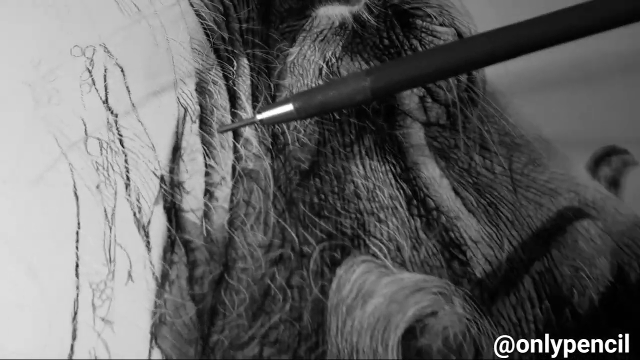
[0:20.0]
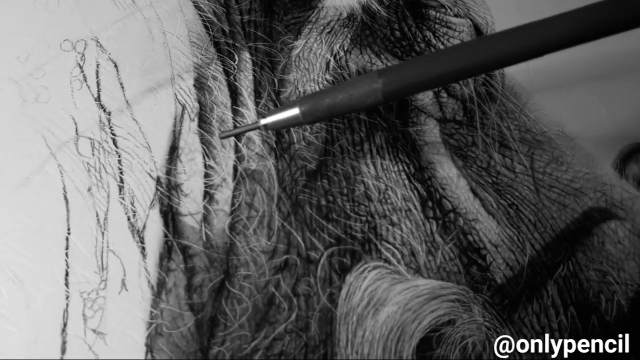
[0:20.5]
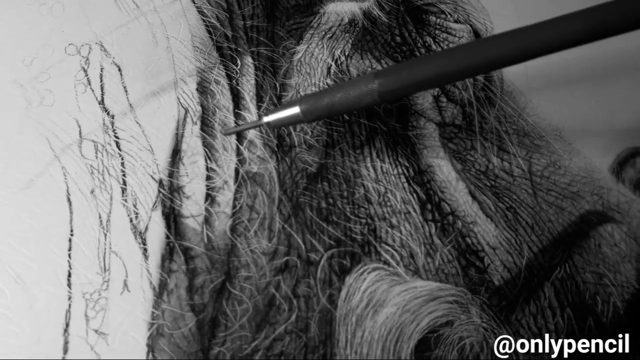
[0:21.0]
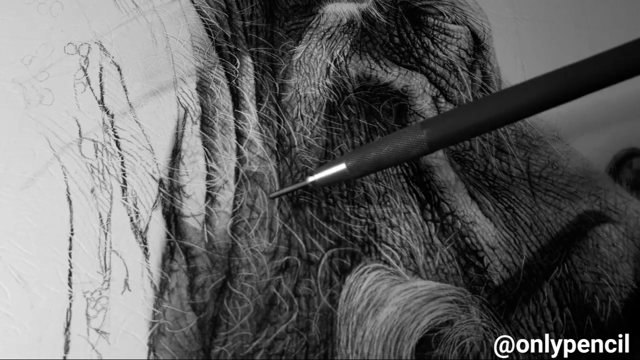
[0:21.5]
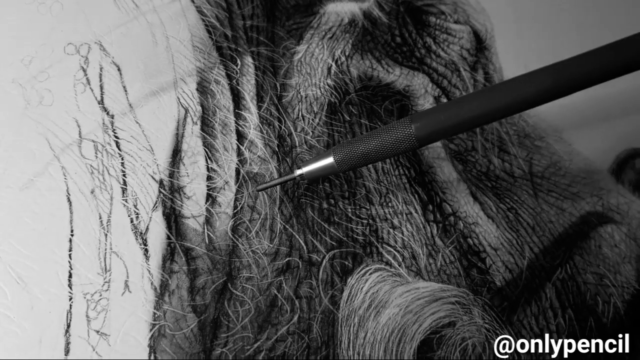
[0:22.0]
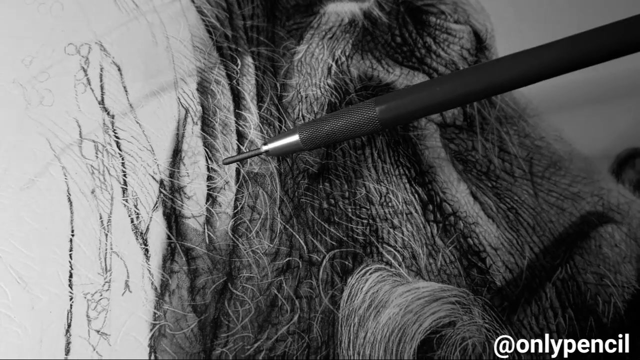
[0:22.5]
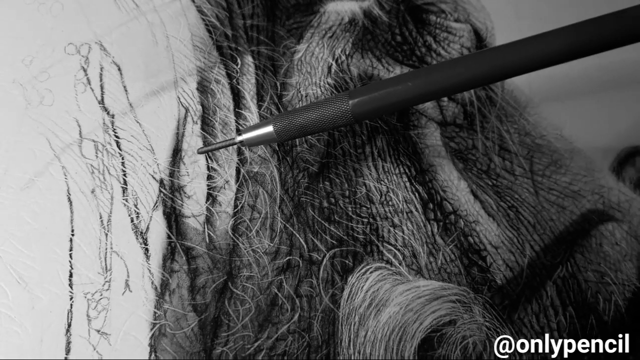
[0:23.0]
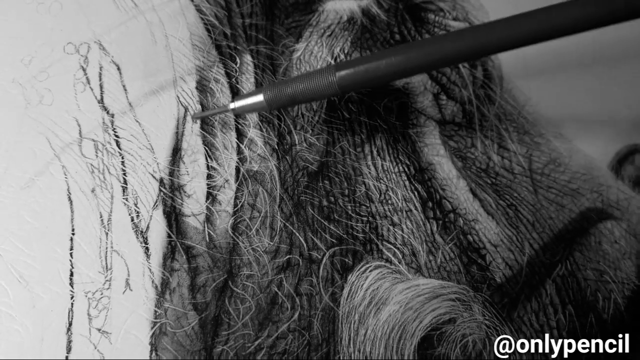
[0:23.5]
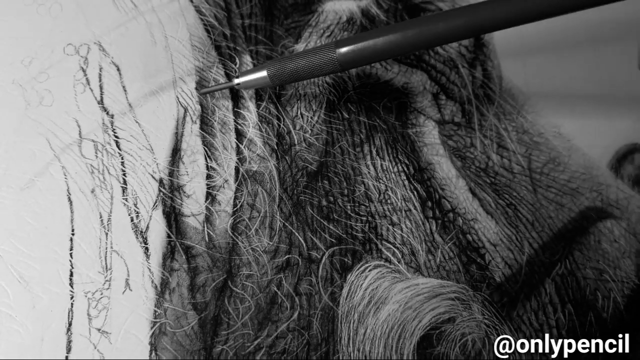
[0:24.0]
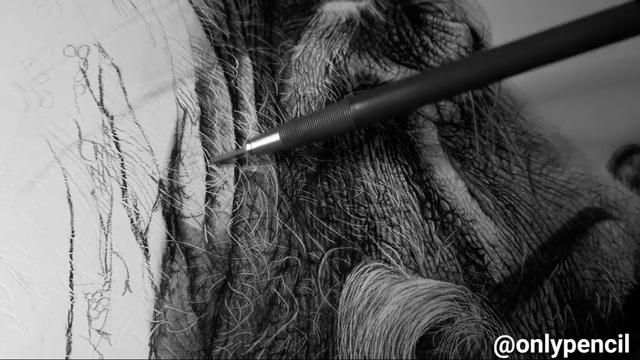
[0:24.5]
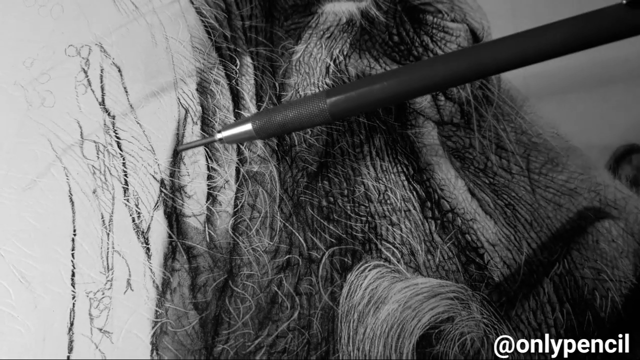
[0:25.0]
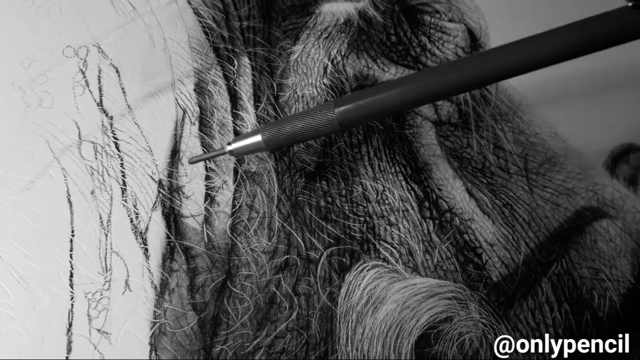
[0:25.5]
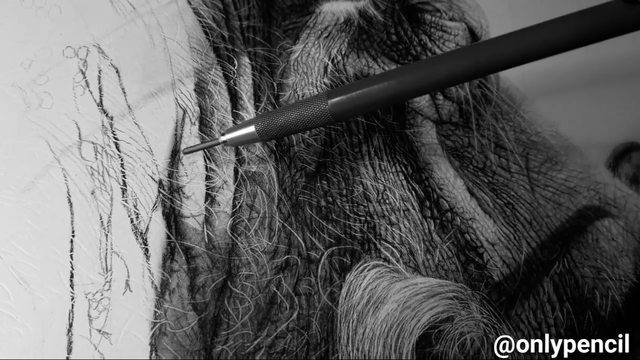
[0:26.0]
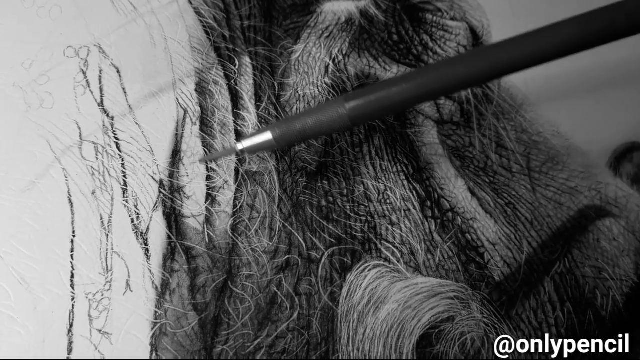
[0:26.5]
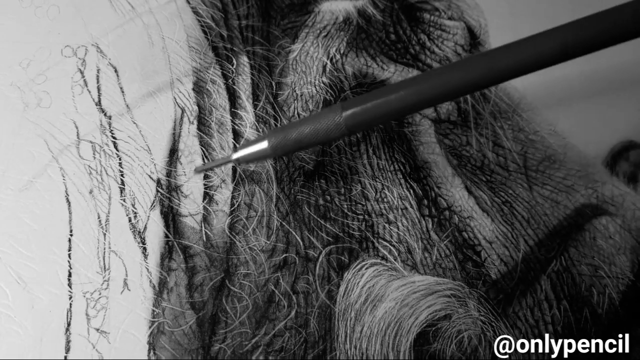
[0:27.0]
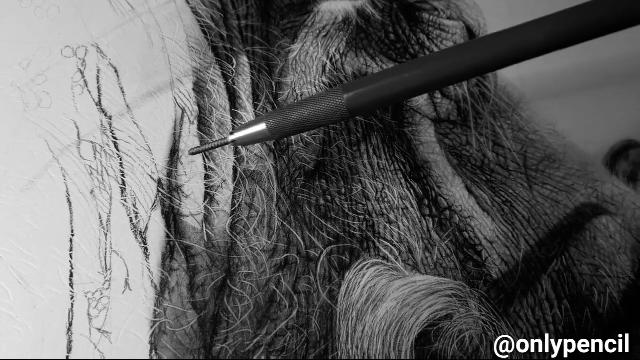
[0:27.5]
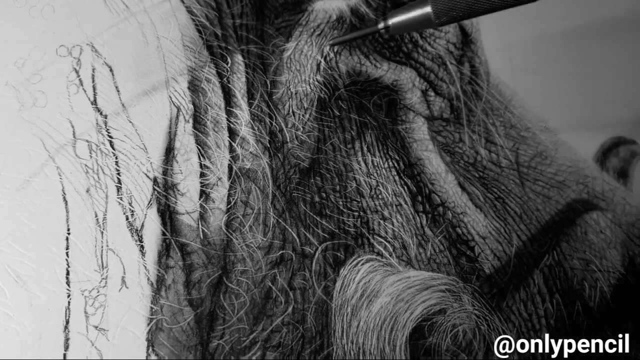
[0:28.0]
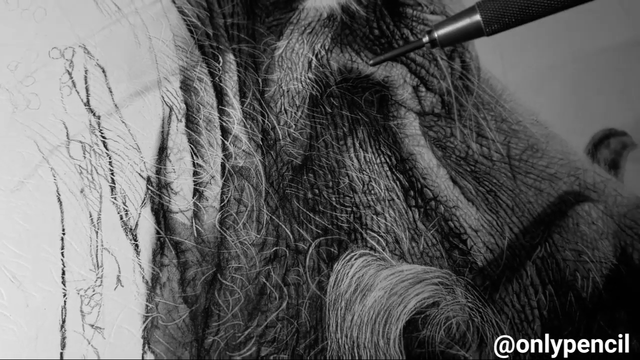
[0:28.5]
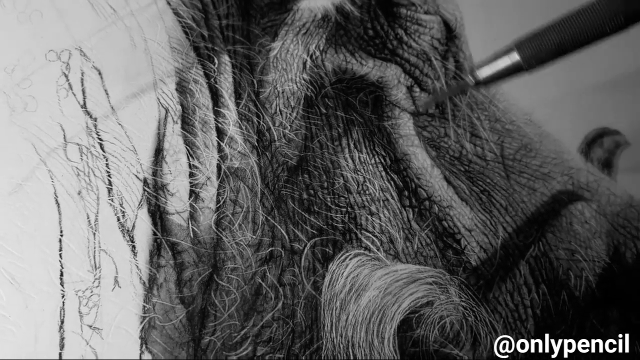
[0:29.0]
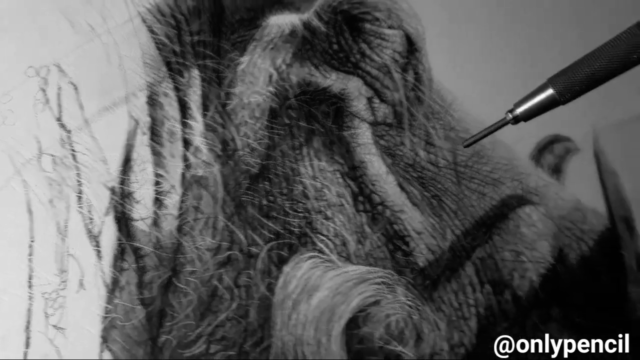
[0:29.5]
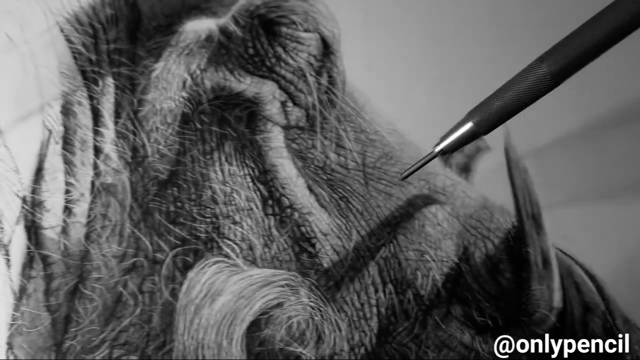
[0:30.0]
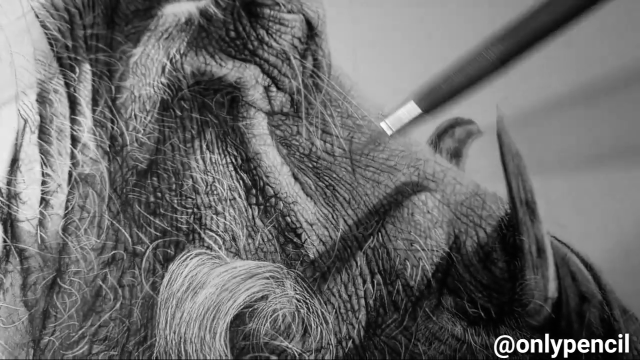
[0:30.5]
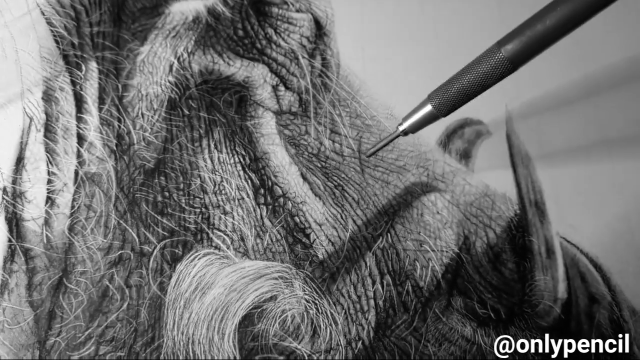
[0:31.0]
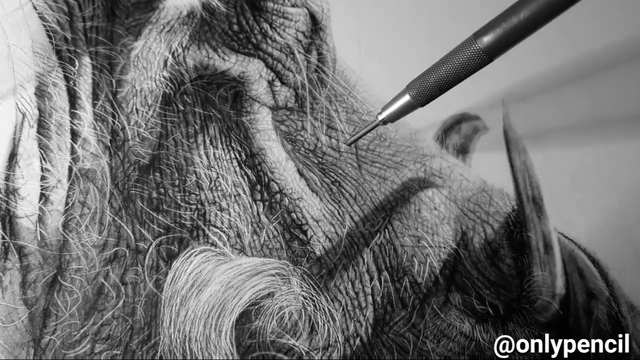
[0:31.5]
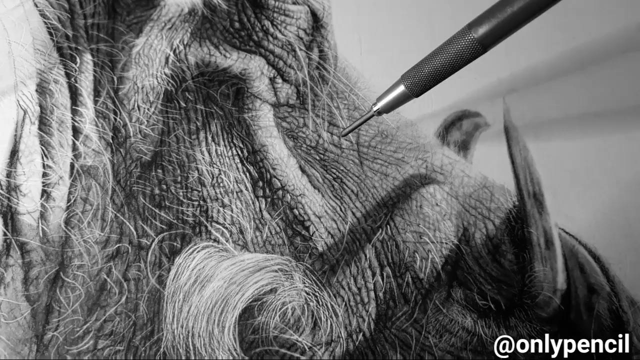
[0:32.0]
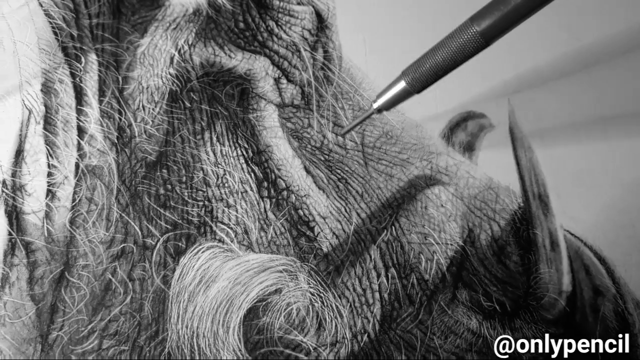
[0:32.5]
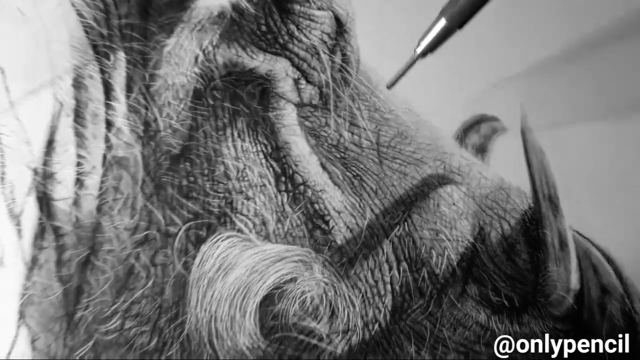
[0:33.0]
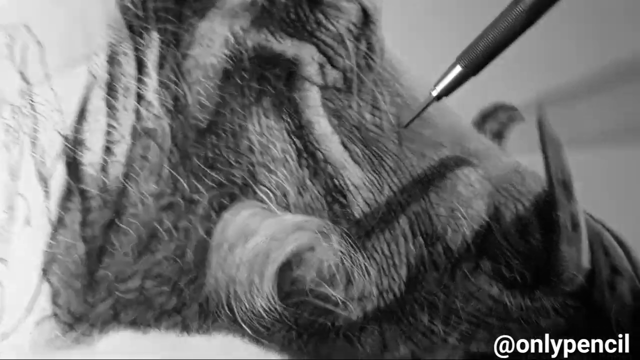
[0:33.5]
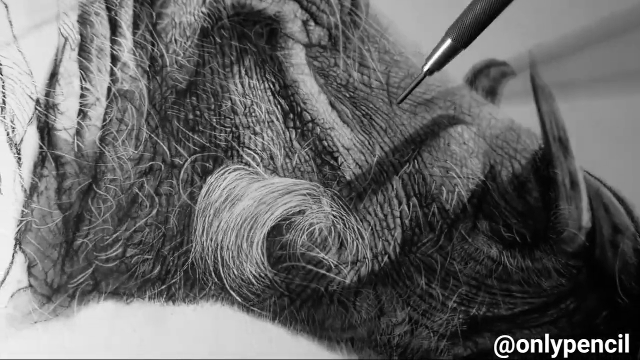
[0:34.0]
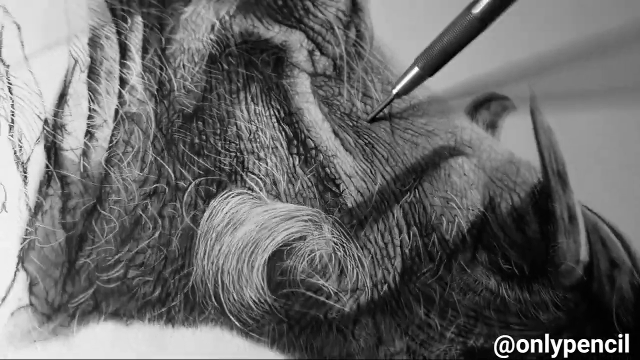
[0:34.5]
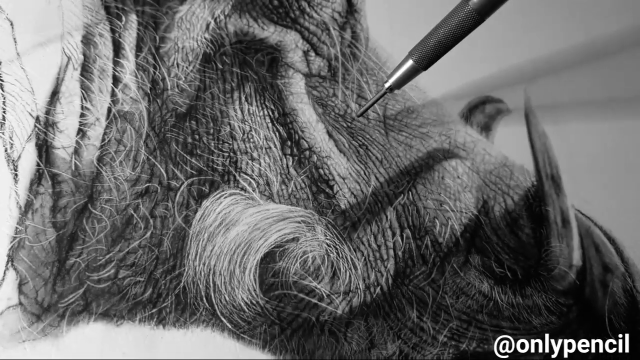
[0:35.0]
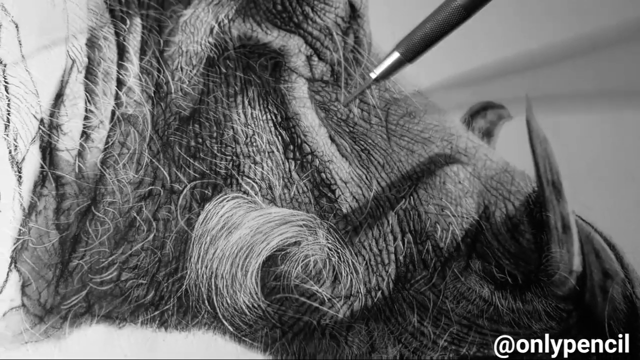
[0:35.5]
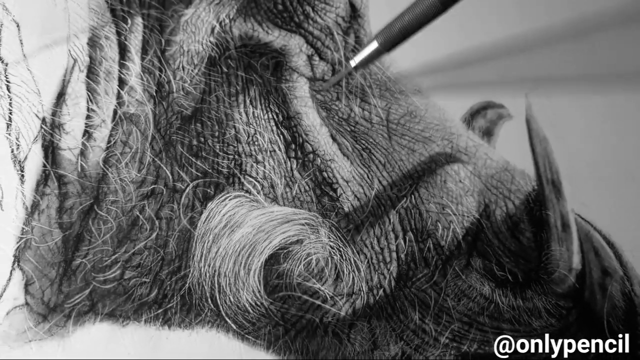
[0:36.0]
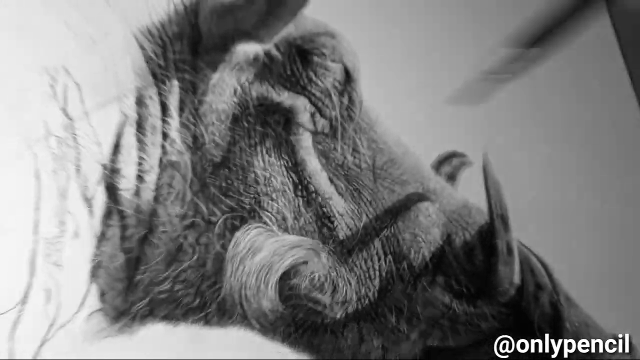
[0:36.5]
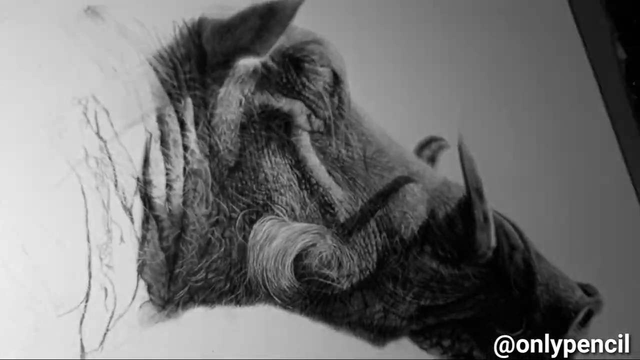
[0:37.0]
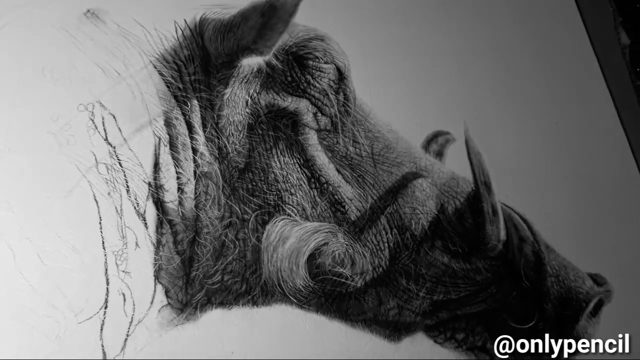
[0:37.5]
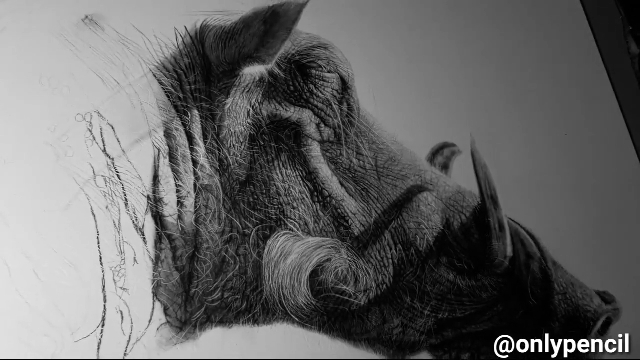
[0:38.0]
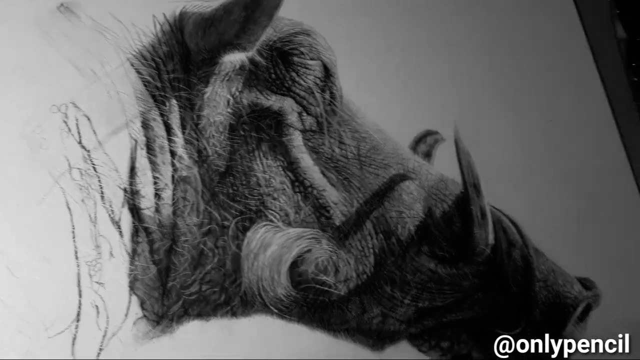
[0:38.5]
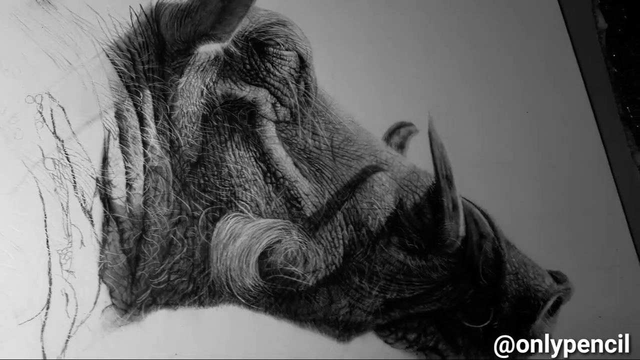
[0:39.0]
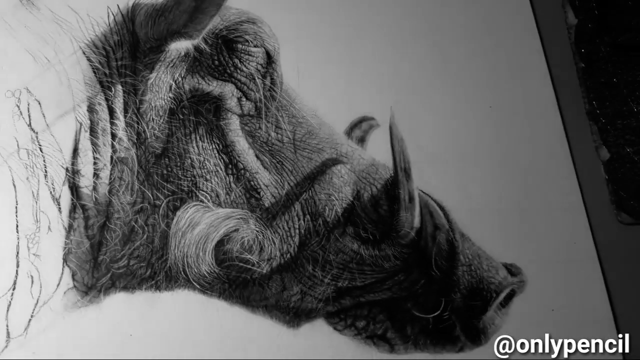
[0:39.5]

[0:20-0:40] The pencil comes in from the top right corner, angling down just past the midway point. It is black with a small silver piece about half an inch long, and its tip sticks out about half an inch. It keeps pointing just behind the neck, moves up a little, then moves back to the part behind the neck that has not been shaded in, which is only a sketched outline with a few hairs drawn in. The pencil moves up and down, pointing back and forth at different parts, then moves up to just below the eye. Right below the eye, coming from under the ear, there is a kind of raised ridge that runs to where the eye is and then goes downward to the right. The pencil points at this ridge, then moves to the small flap it goes behind, which comes up from the bottom angling up to the right, just left of the horns on the front of the nose. It then points at the part below and in front of the eye, the upper side of the nose right beside the ridge. The pencil moves off the screen and the camera straightens back up for a wide shot of the painting. A little to the left, the table is visible, along with something black coming in on the left side that looks like a small tray.